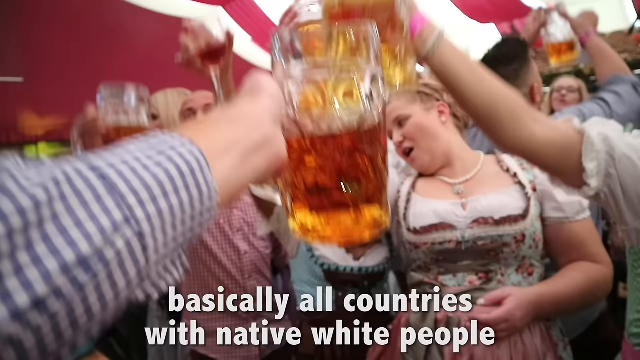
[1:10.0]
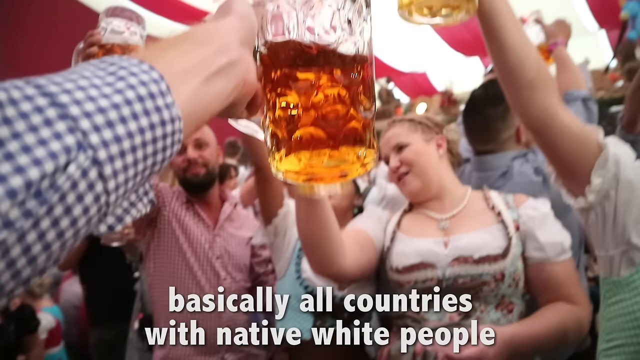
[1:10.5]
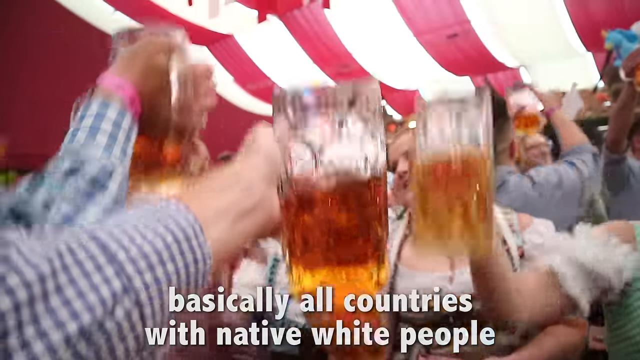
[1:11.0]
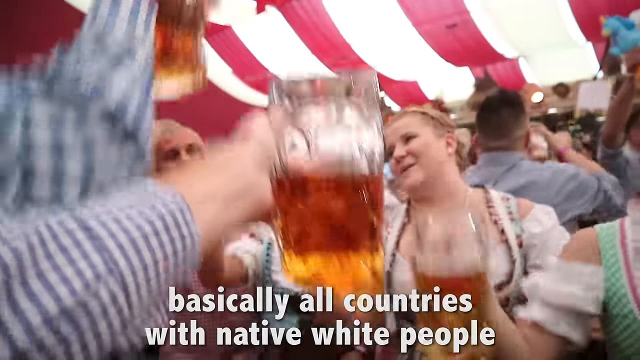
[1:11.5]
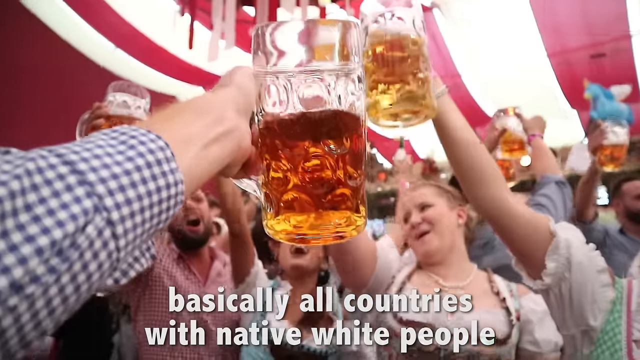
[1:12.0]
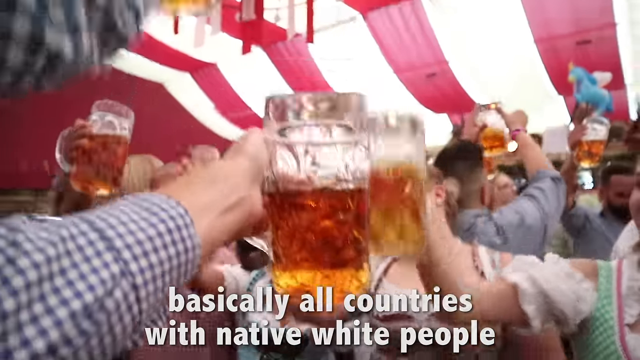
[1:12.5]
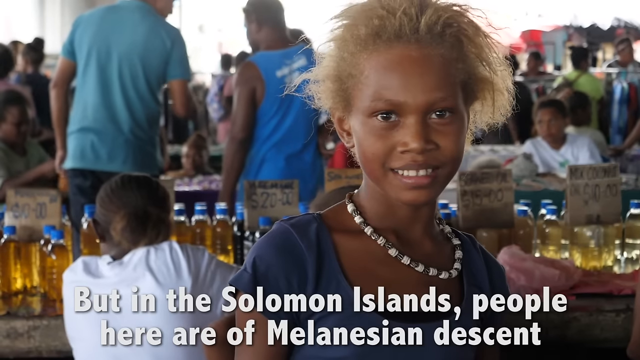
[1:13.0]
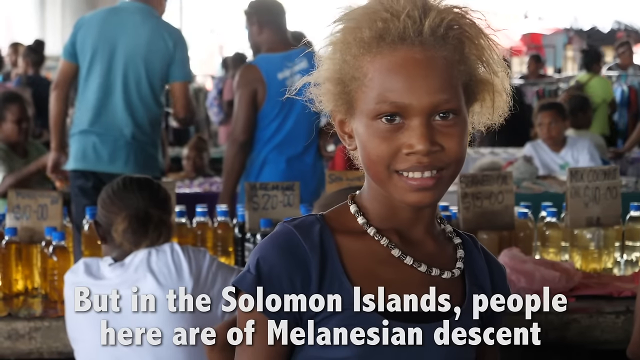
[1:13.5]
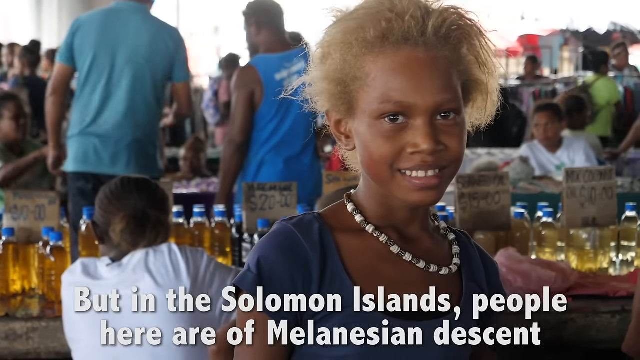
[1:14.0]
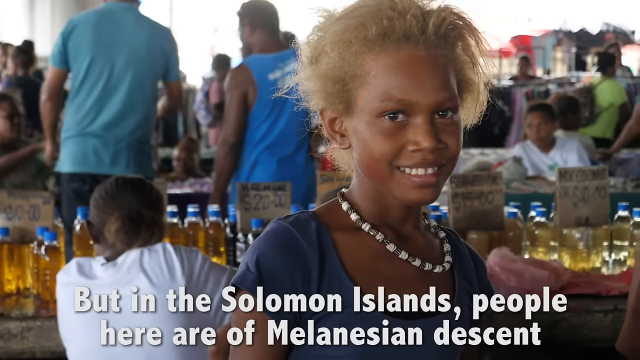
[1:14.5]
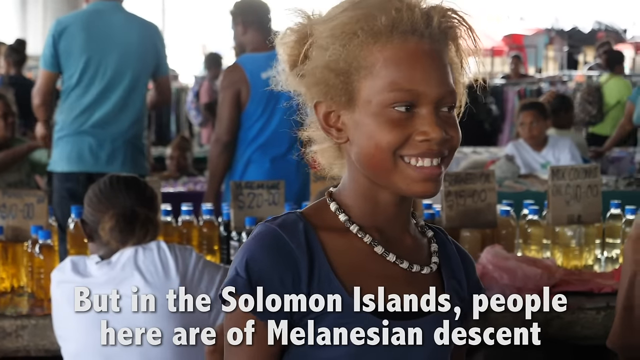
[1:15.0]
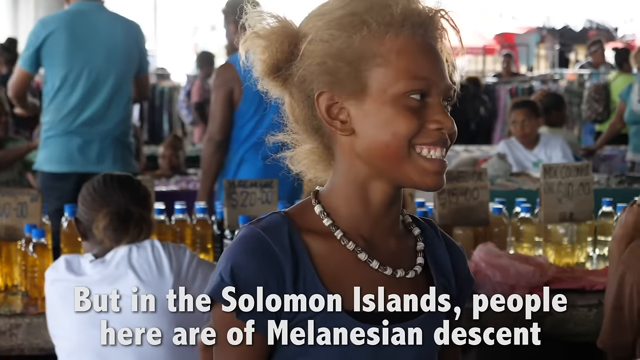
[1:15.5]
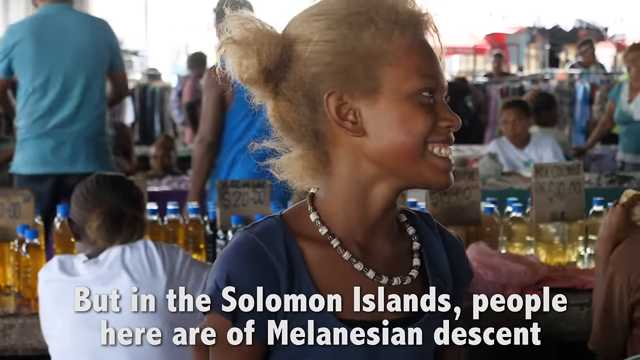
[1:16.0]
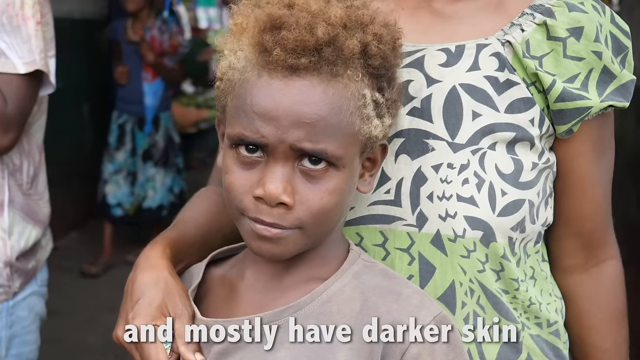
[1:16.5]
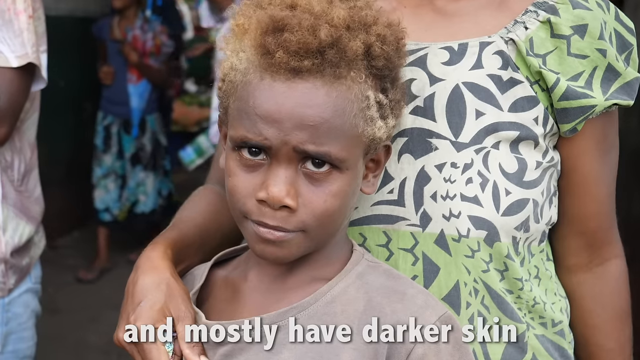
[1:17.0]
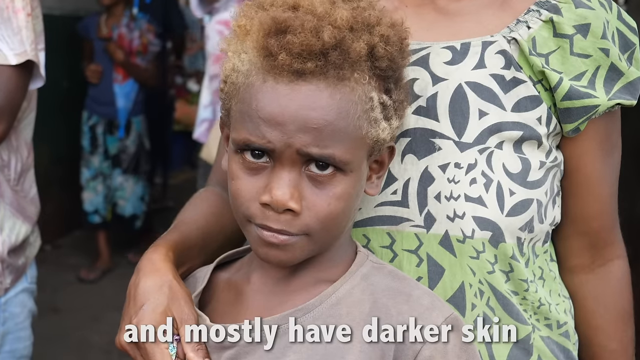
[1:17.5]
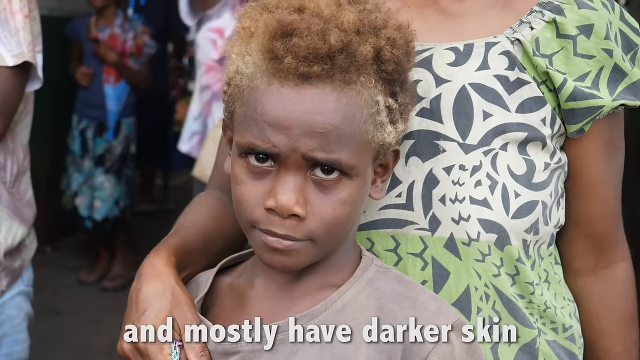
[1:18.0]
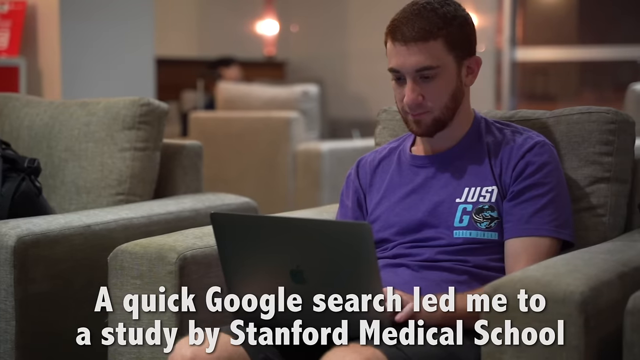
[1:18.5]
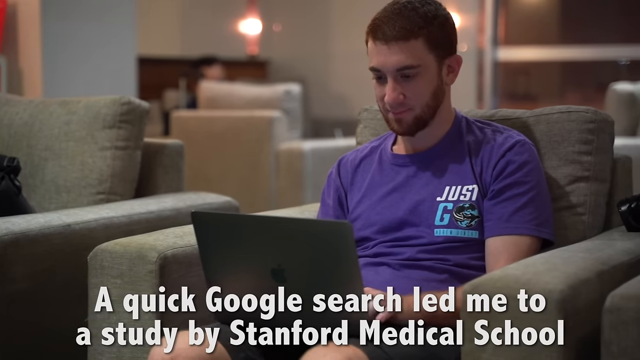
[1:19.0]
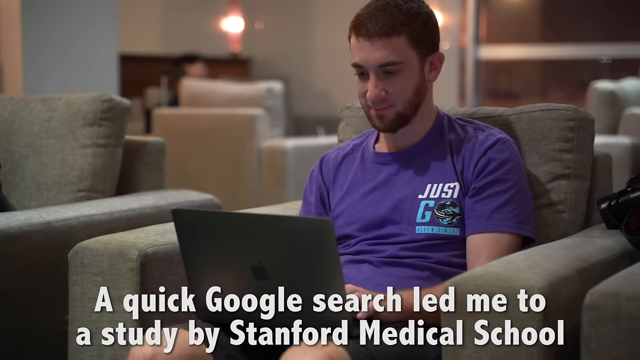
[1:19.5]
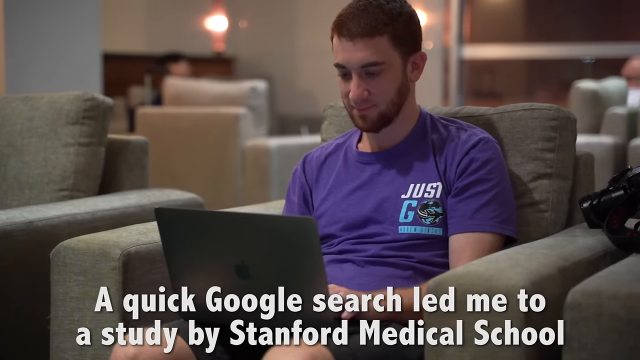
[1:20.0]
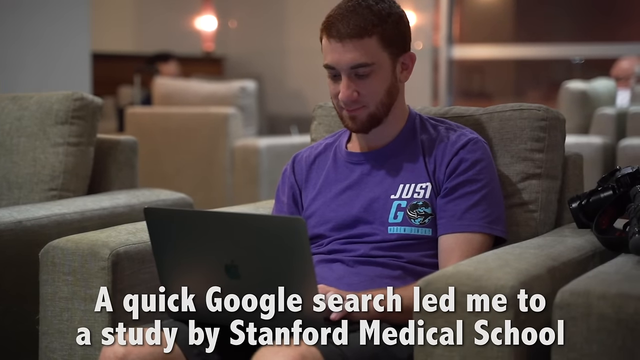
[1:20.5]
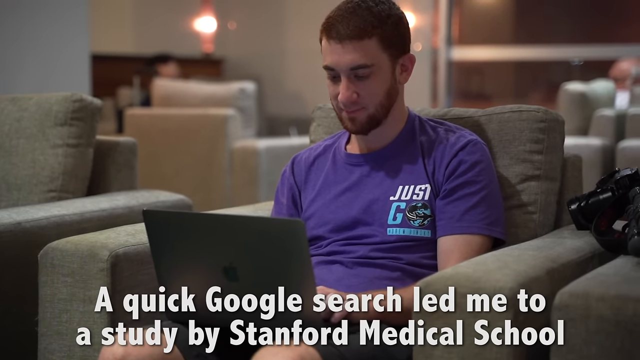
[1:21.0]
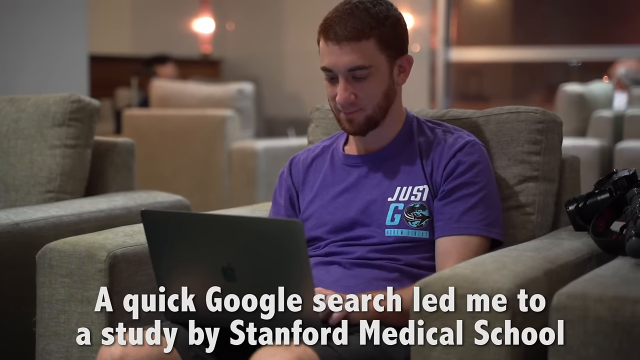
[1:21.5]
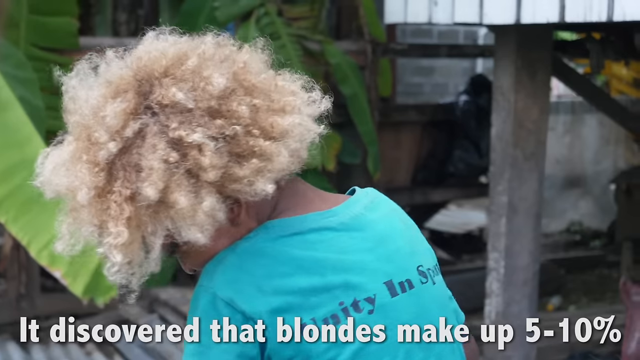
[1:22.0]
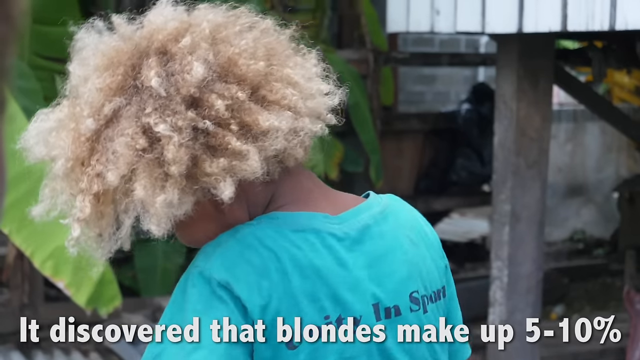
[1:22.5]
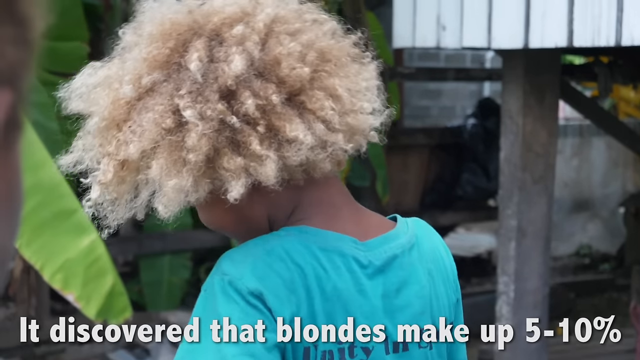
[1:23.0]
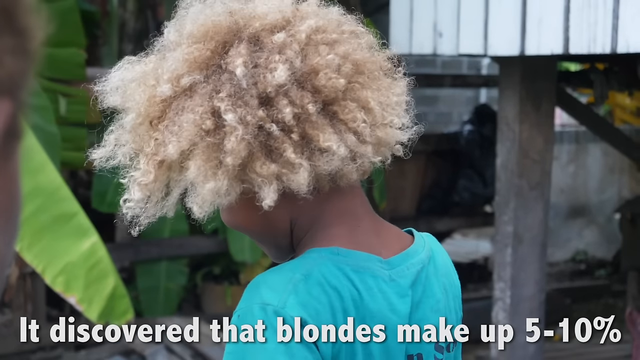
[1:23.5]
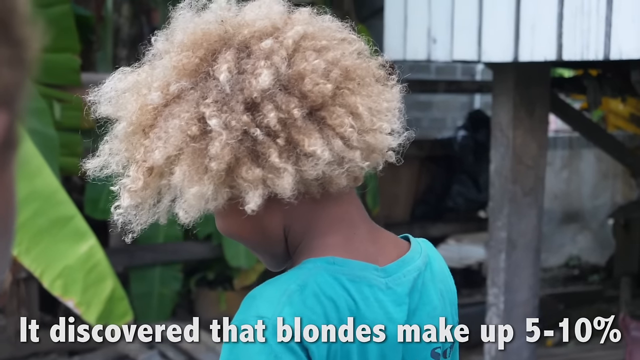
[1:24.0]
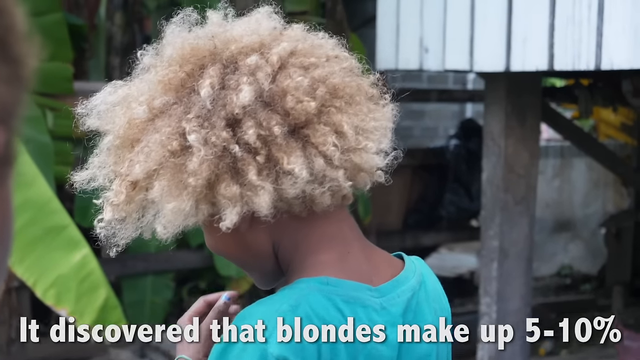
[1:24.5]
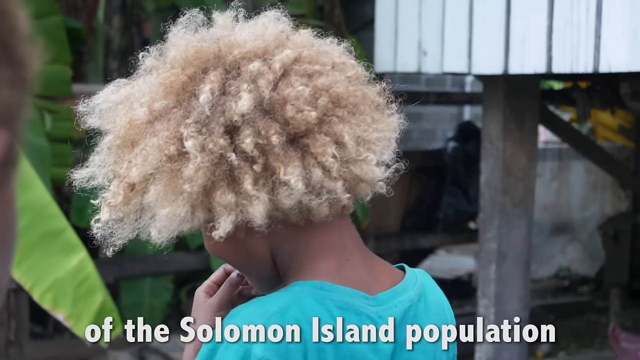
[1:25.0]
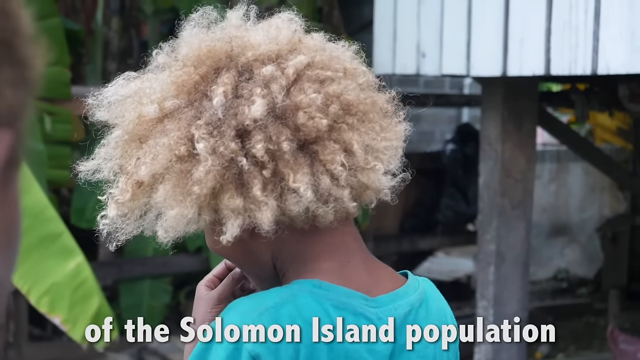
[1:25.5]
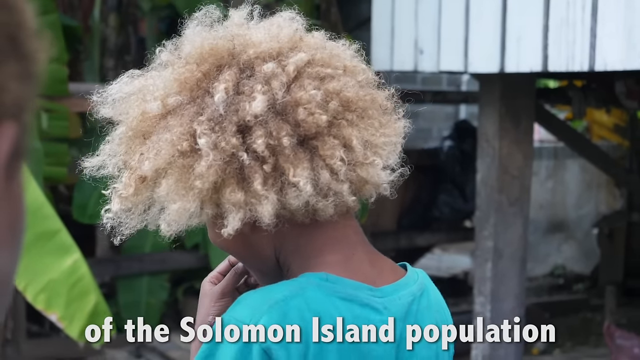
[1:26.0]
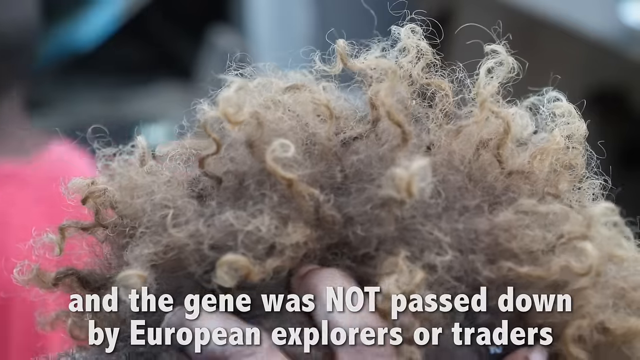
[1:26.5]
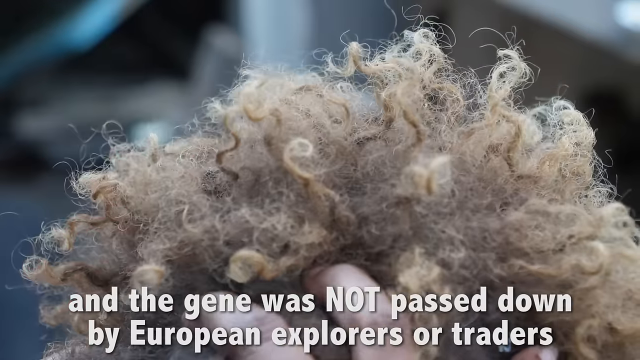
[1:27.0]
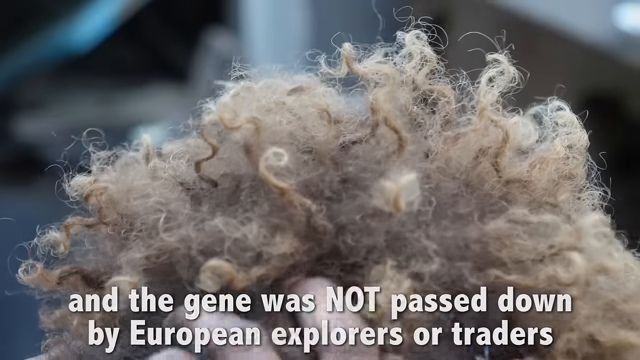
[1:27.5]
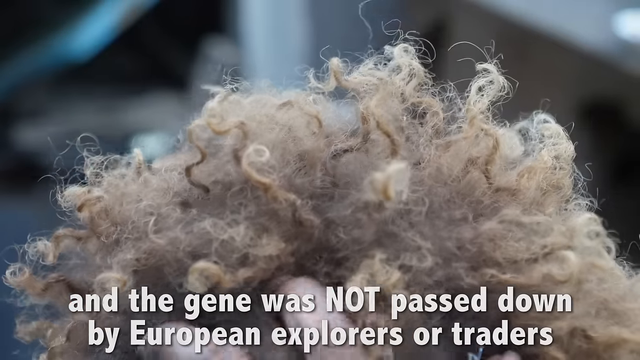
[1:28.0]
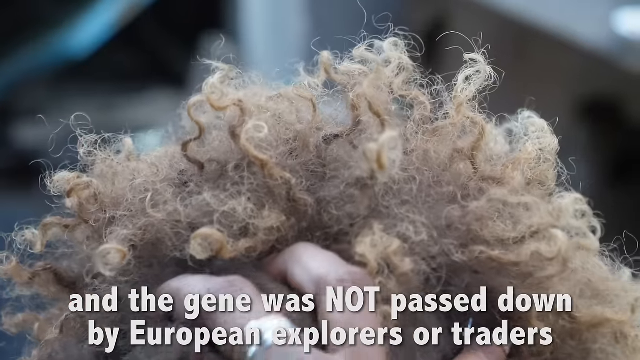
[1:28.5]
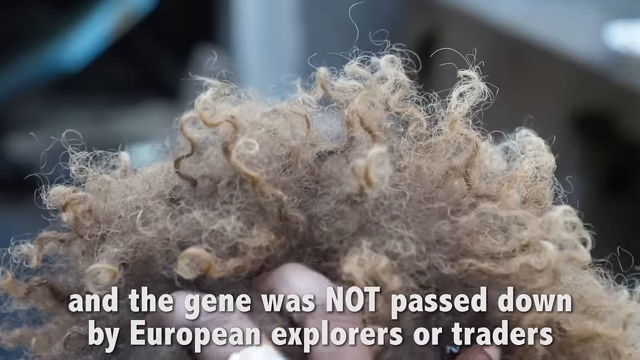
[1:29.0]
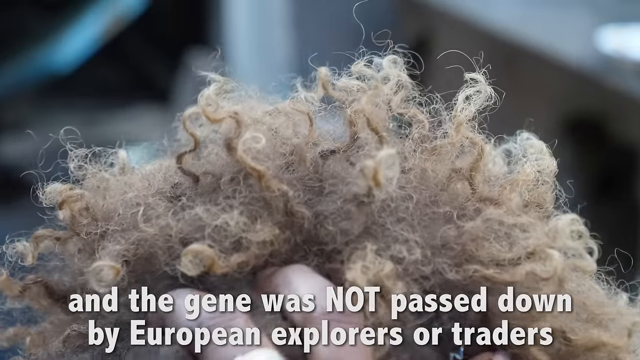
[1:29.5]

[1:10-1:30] The camera pans across a group of locals; some smile, some look serious, and some look shy. Some of them have curly blonde hair, which contrasts with their dark skin.